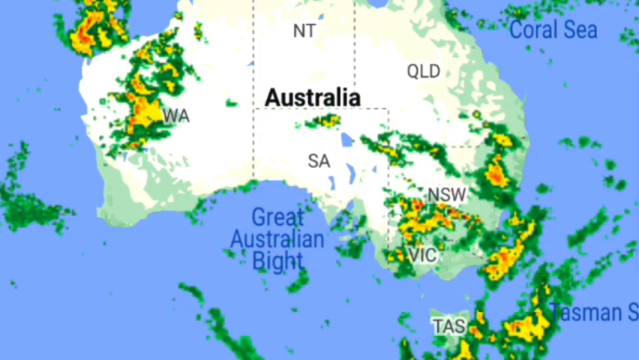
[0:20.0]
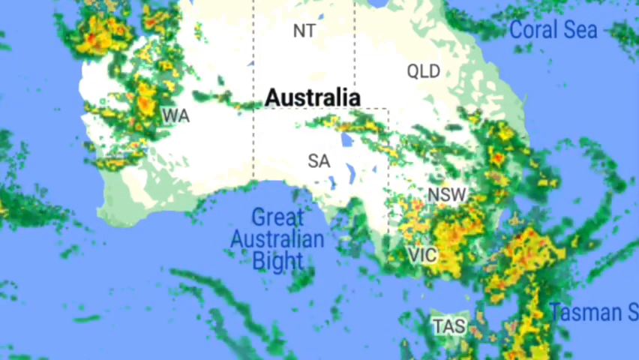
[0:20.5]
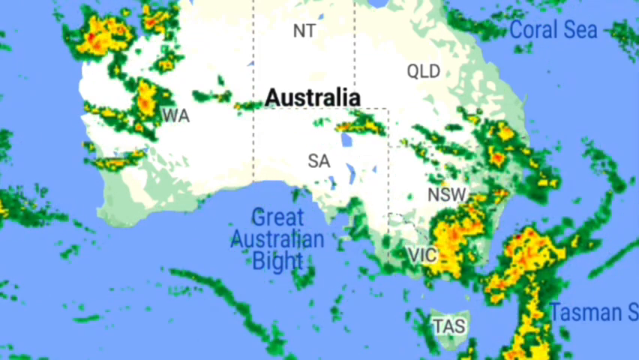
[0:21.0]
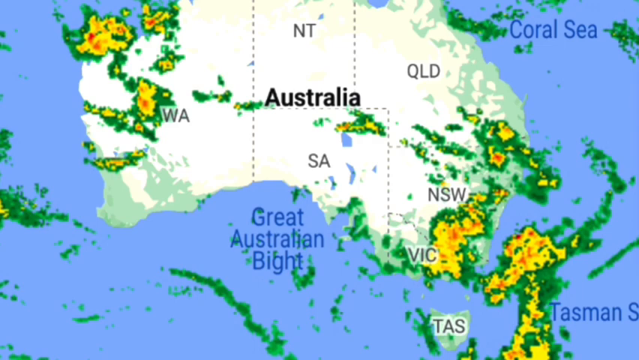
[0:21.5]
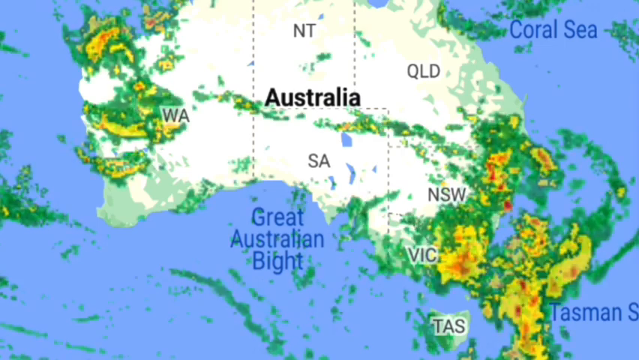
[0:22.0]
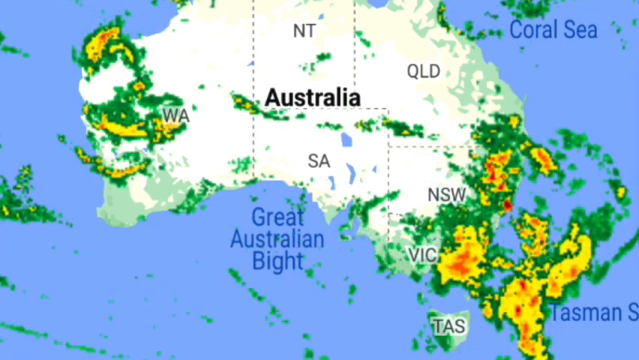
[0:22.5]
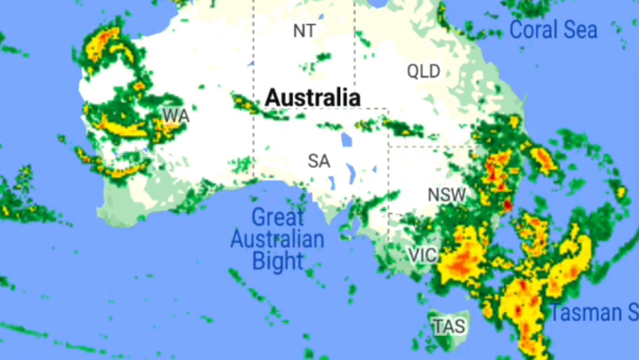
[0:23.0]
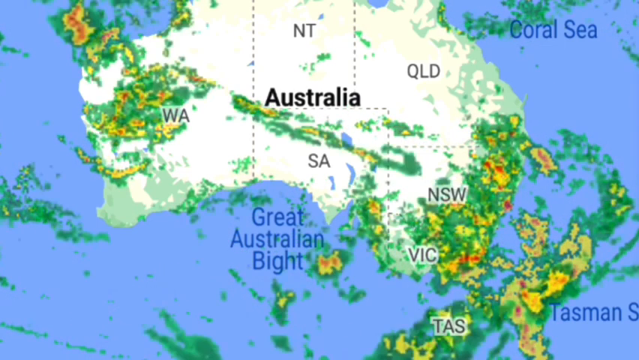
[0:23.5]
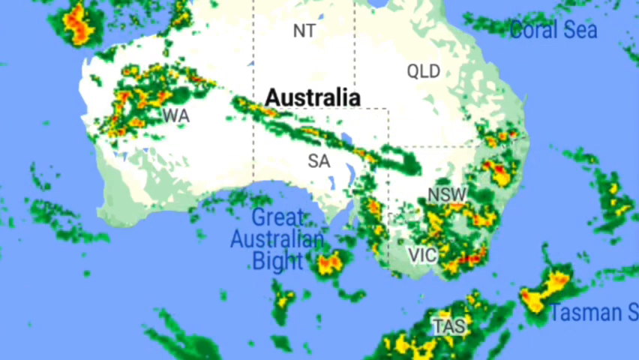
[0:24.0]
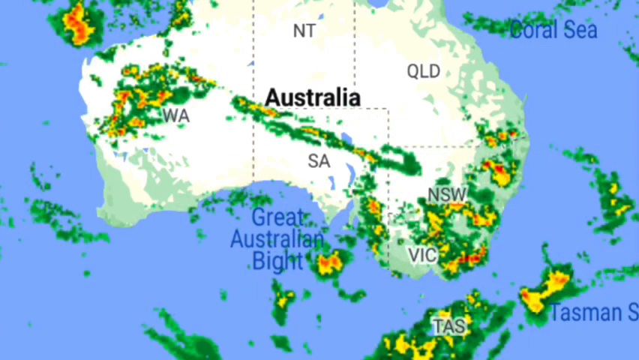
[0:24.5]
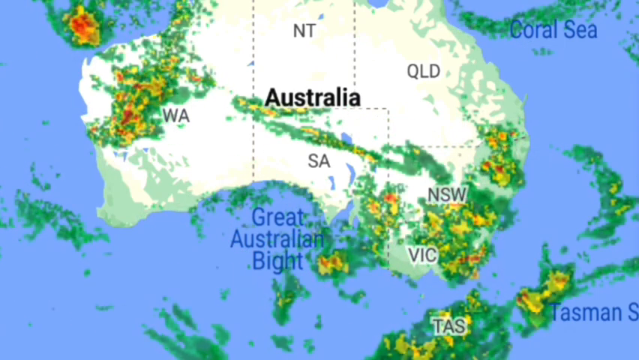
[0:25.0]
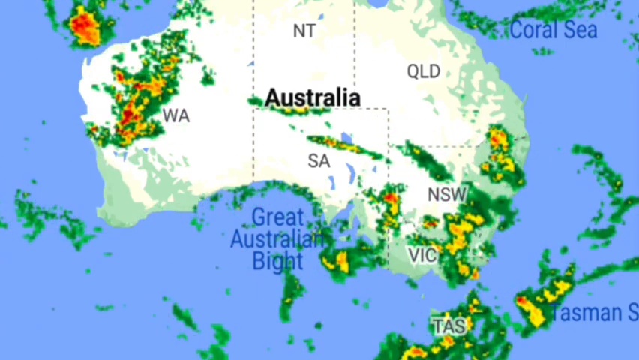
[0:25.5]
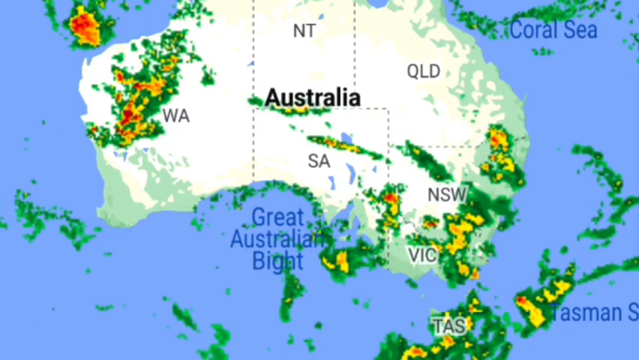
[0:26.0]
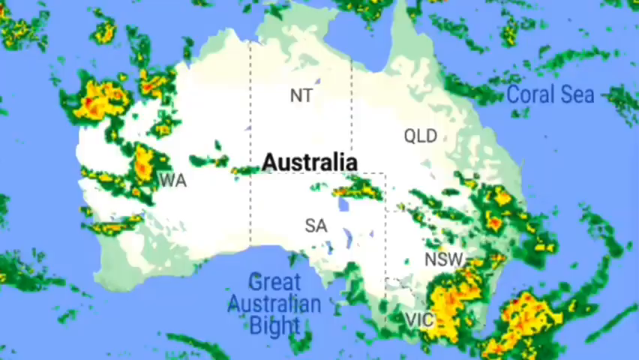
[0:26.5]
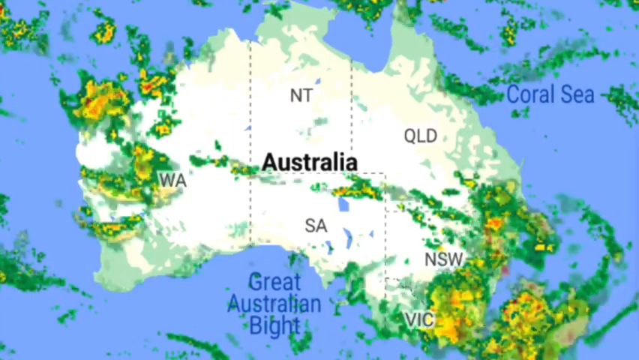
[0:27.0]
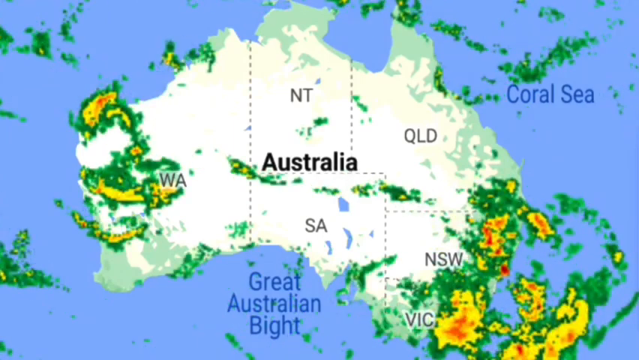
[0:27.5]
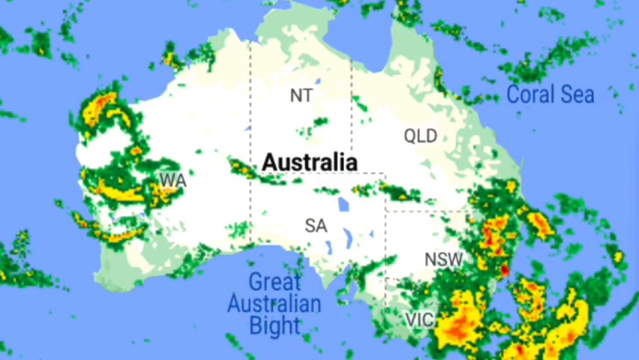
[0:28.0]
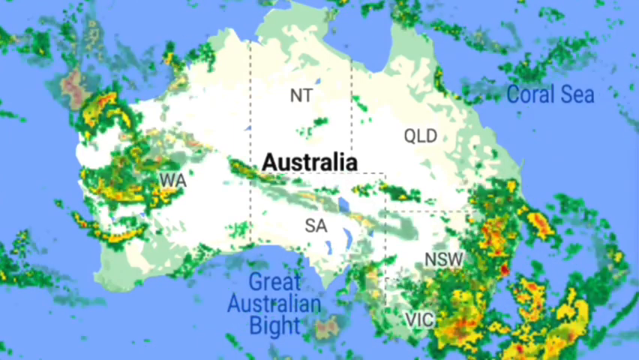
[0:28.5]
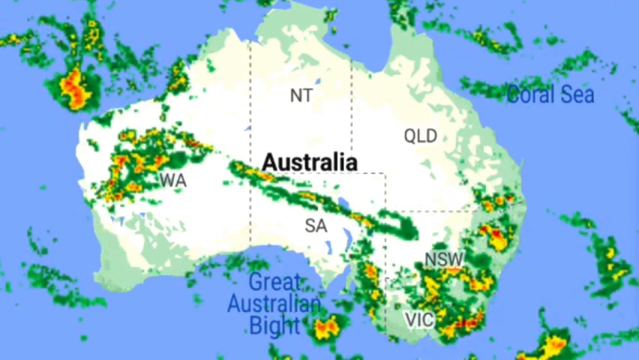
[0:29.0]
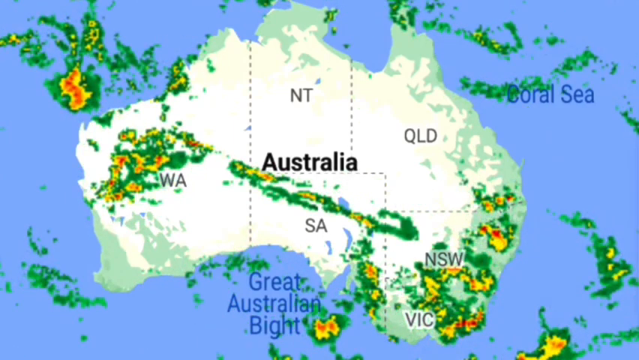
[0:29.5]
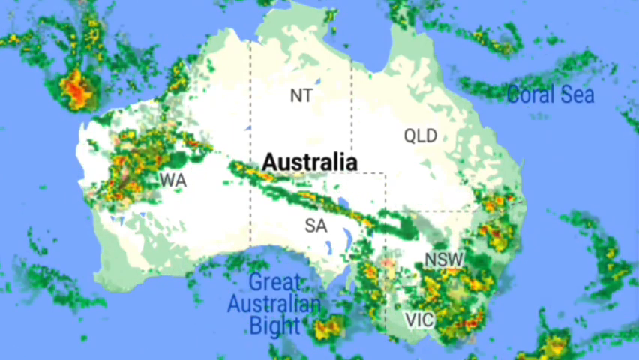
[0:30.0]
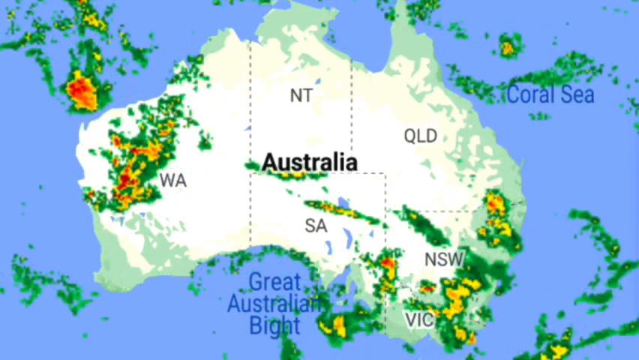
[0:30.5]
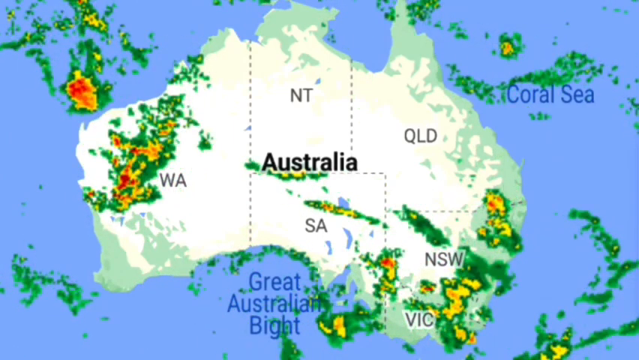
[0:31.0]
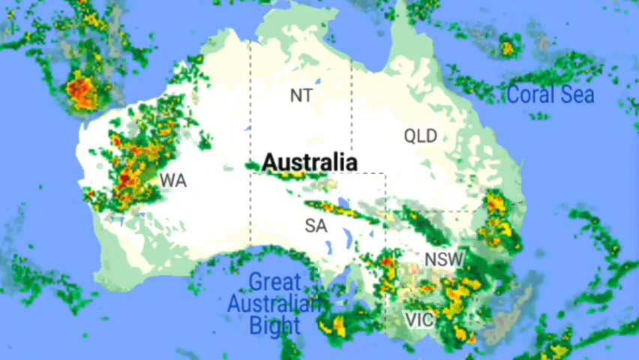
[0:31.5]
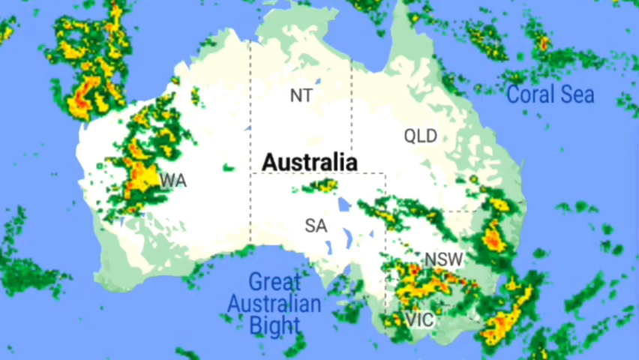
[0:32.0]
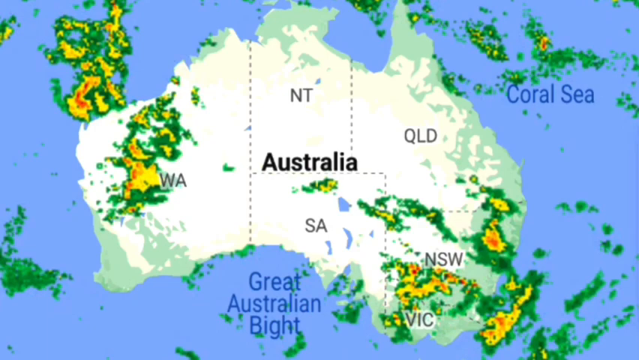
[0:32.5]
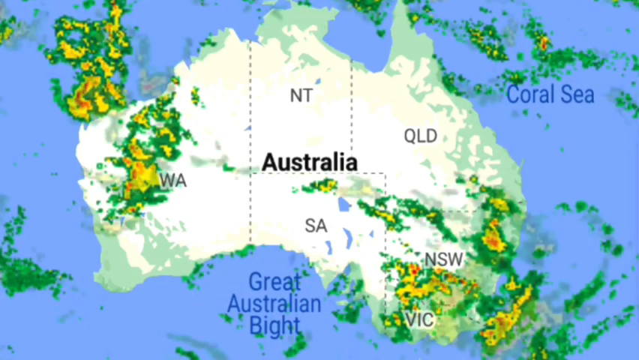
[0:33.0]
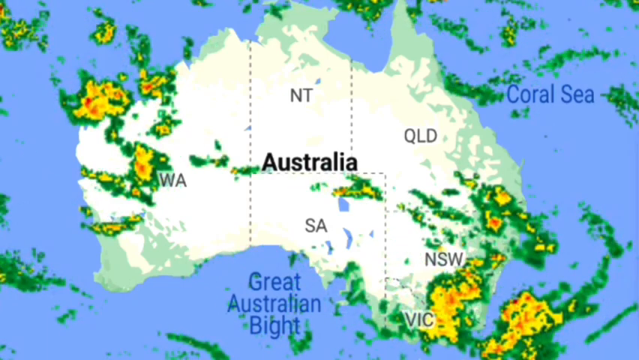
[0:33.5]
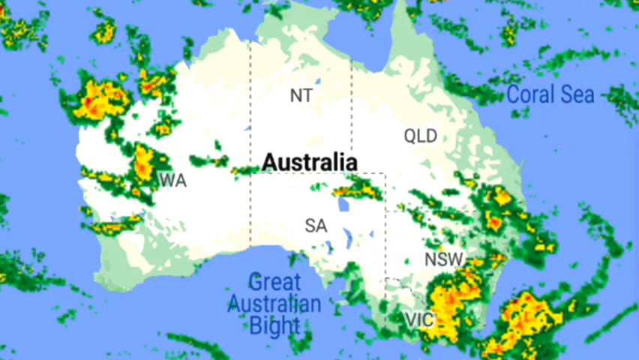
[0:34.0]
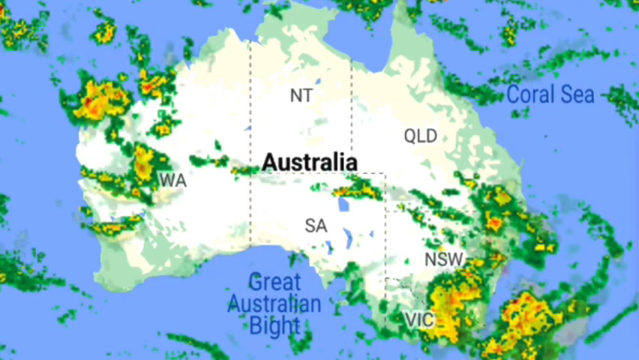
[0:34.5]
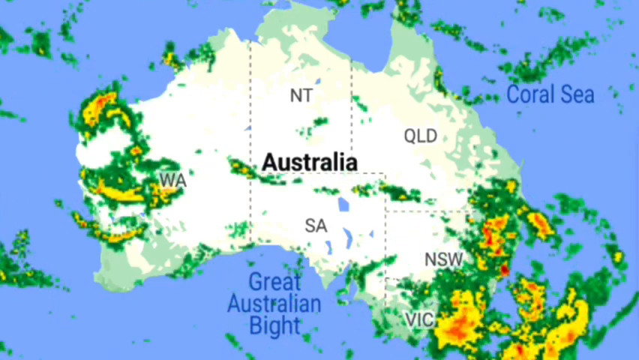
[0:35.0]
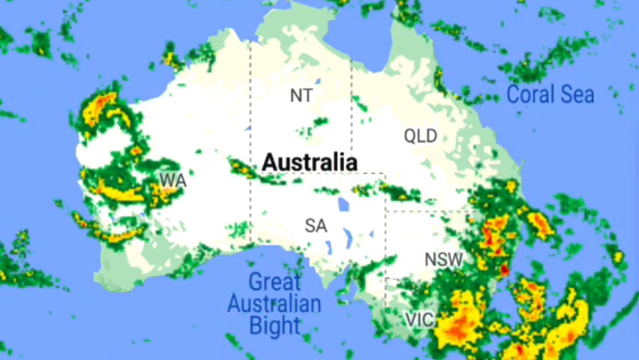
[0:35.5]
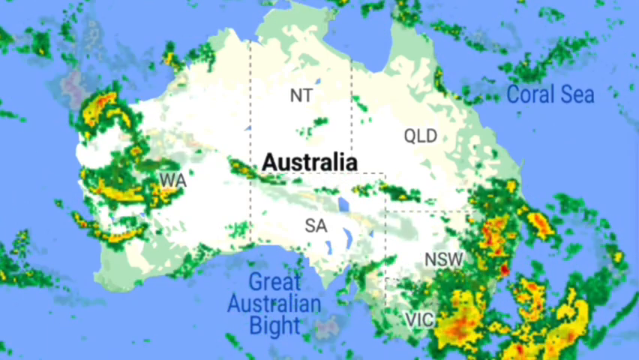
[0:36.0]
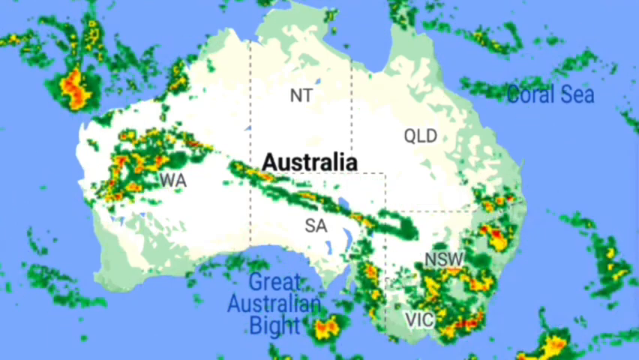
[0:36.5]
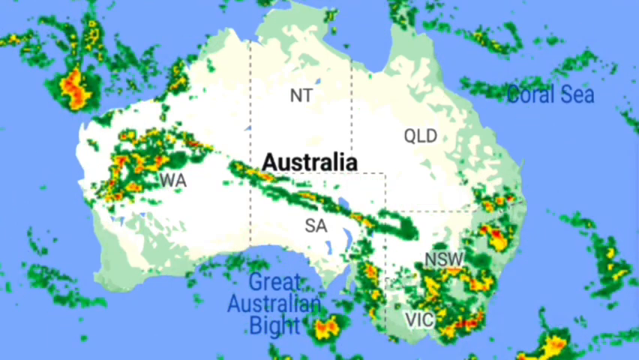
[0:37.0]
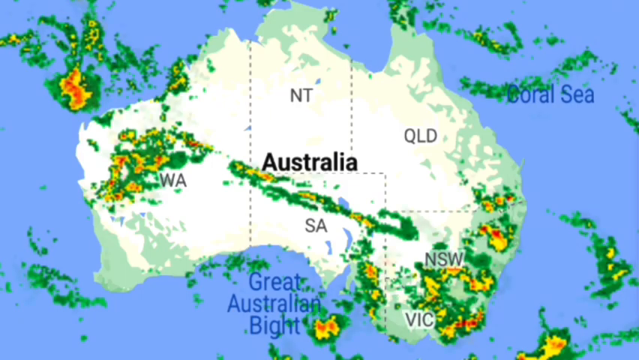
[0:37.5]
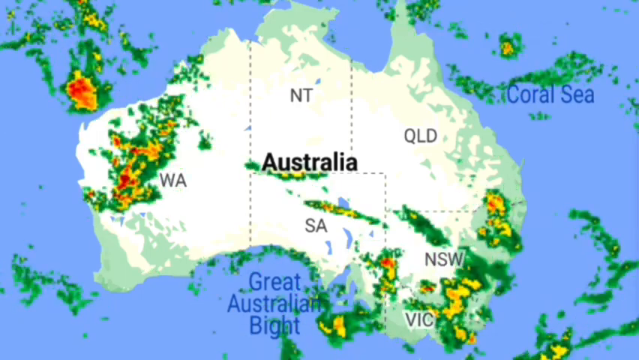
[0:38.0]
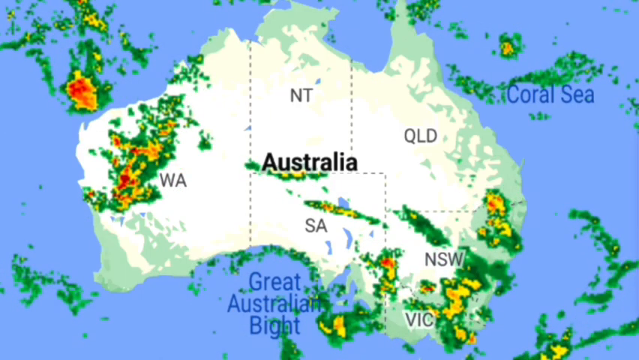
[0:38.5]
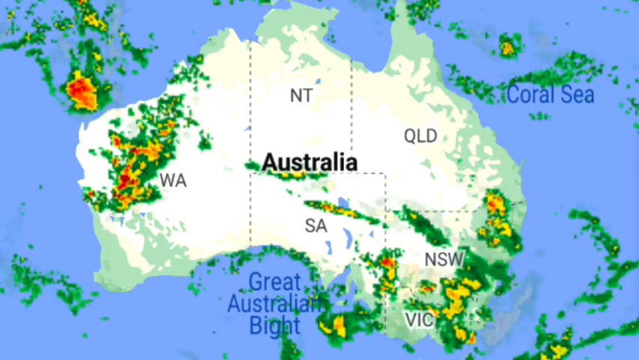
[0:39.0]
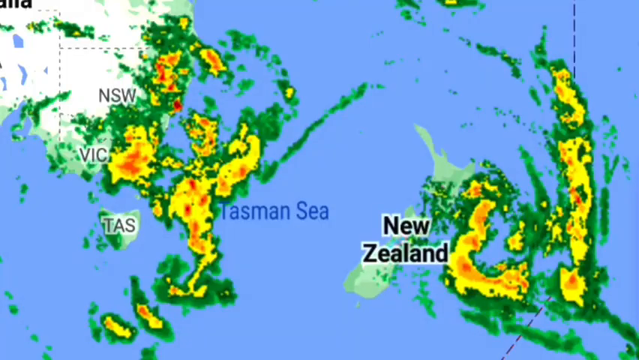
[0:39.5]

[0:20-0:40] A close-up map shows Australia with the word "Australia" written in black in the middle of the country. On its left and right sides, small yellow, green, orange and red areas move from left to right, showing storms and their intensities. The area around Australia is baby blue. Underneath Australia, "Great Australian Bight" is written in dark blue, and up to the right of Australia it says "Coral Sea". The screen then changes to show the storms along the east and west coasts moving to the right: those on the east coast move off into the Coral Sea, while those on the west coast move inland toward the middle of the country.